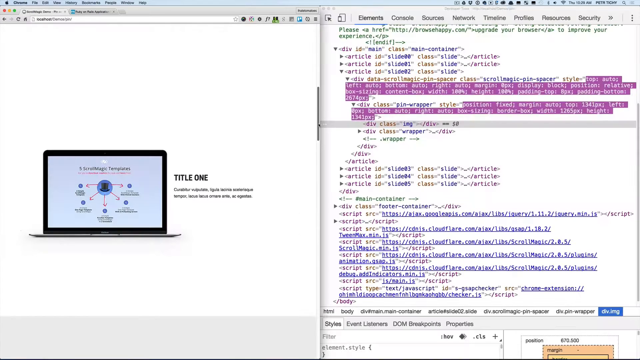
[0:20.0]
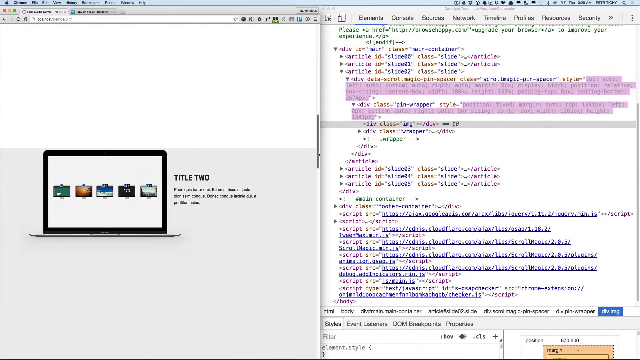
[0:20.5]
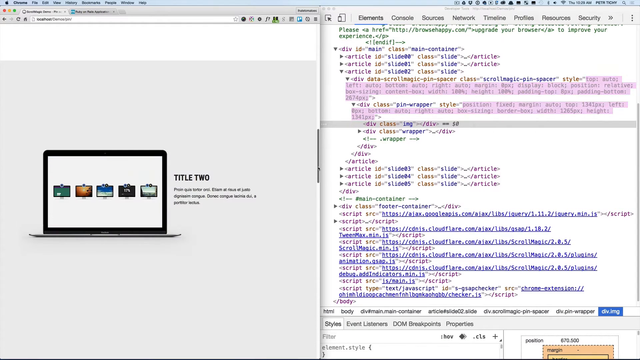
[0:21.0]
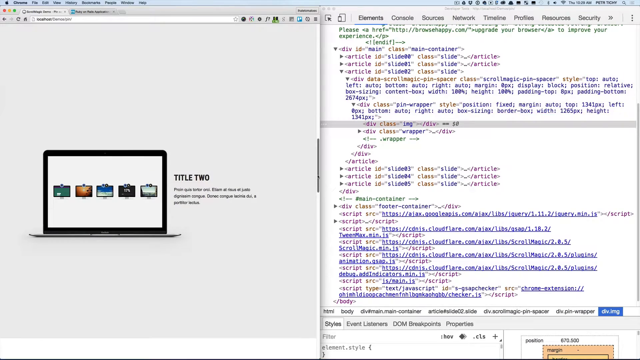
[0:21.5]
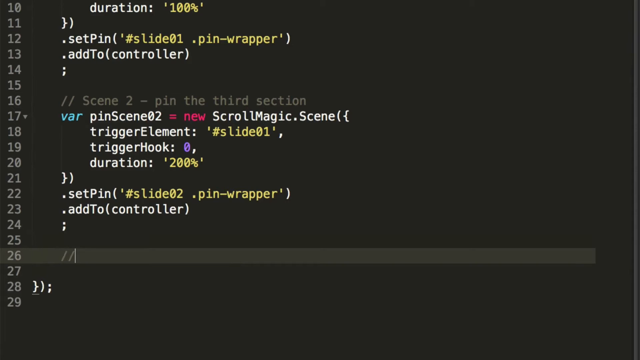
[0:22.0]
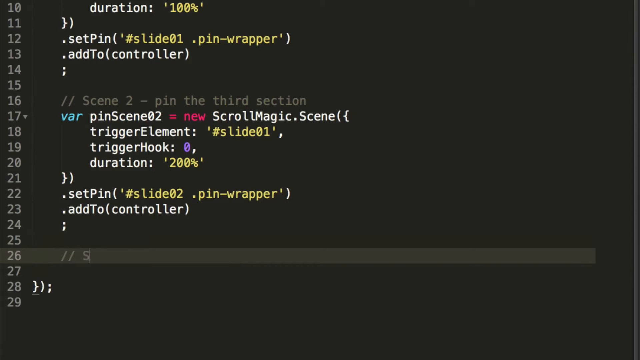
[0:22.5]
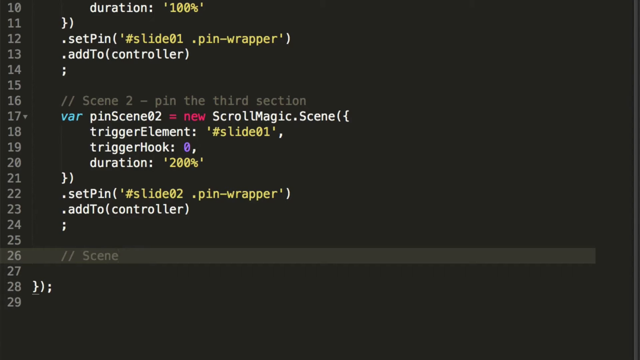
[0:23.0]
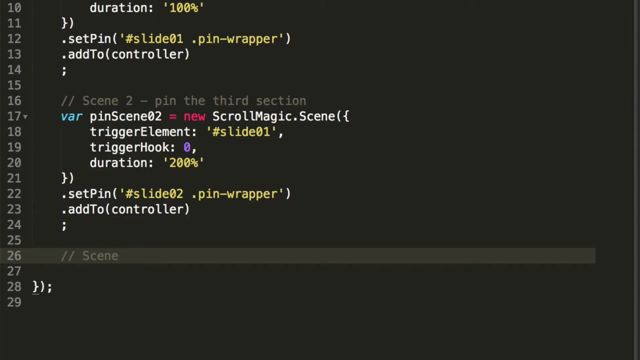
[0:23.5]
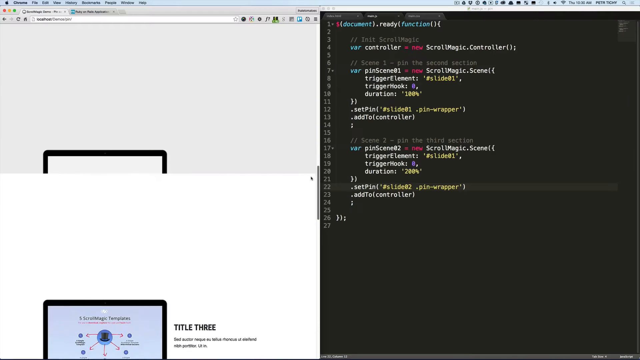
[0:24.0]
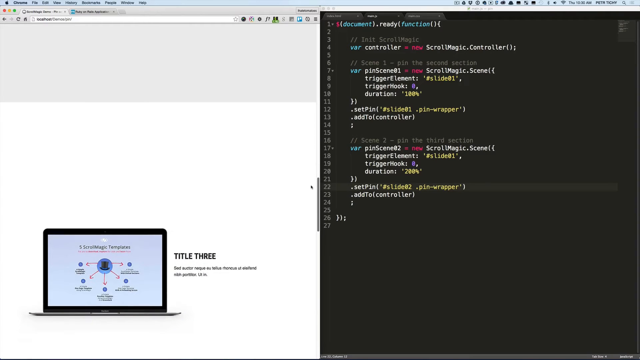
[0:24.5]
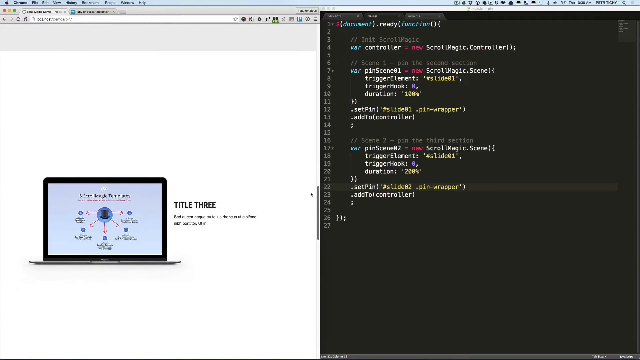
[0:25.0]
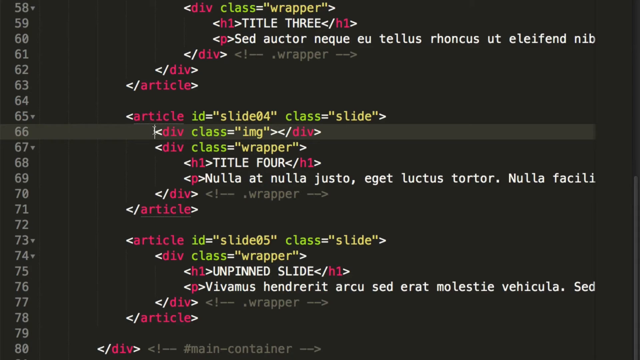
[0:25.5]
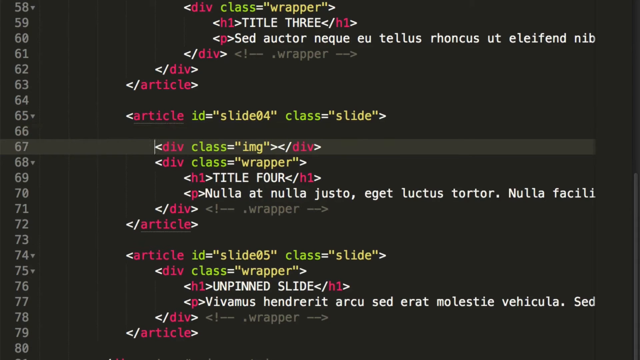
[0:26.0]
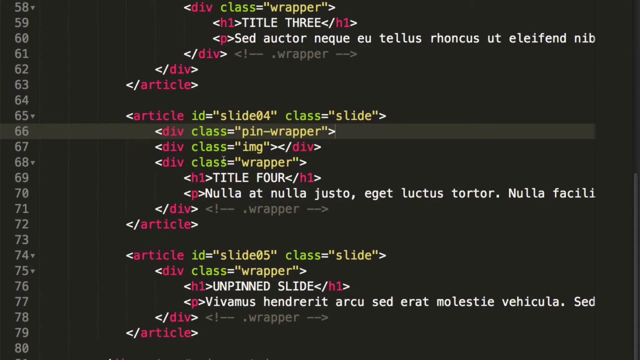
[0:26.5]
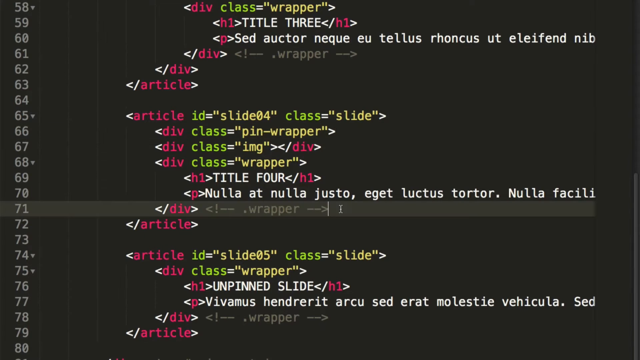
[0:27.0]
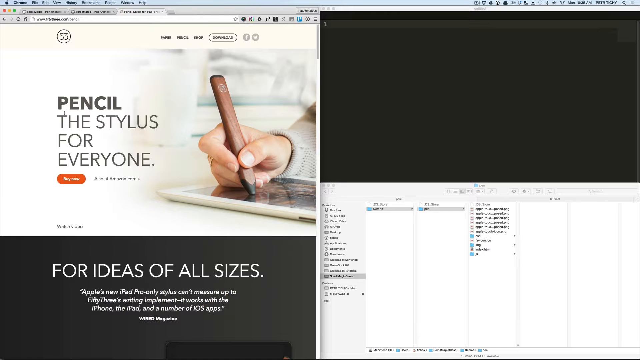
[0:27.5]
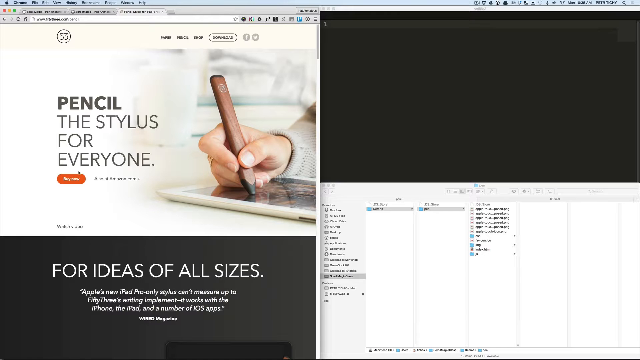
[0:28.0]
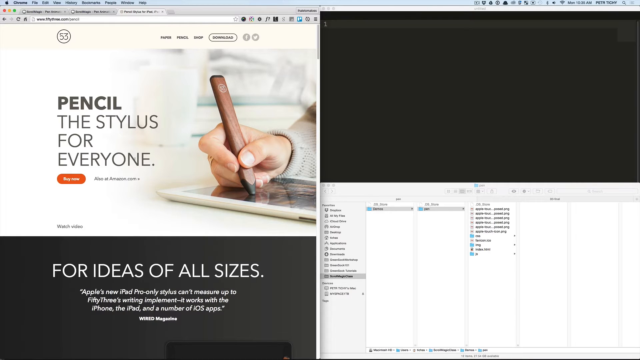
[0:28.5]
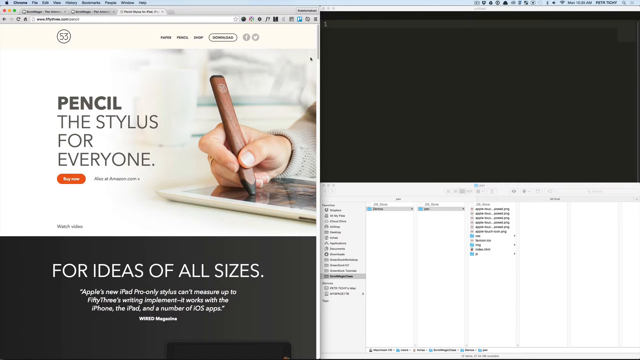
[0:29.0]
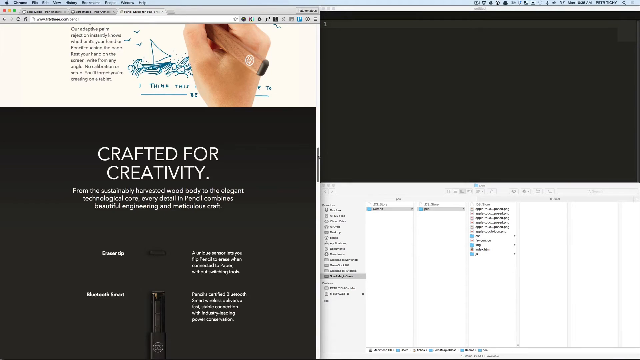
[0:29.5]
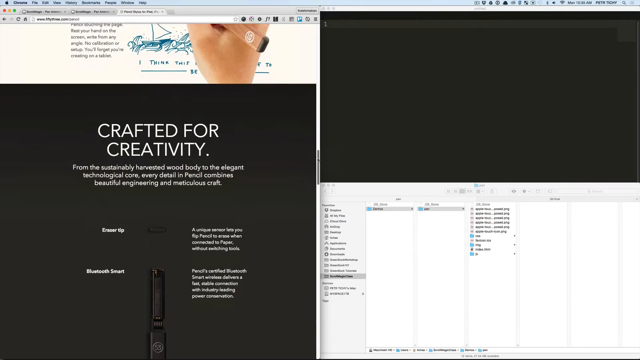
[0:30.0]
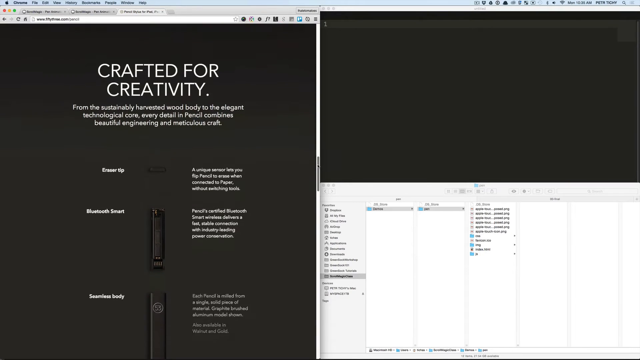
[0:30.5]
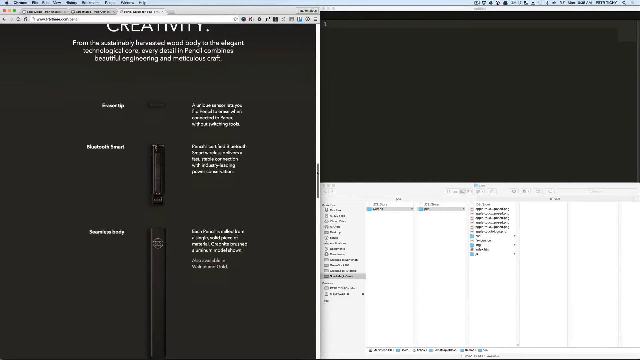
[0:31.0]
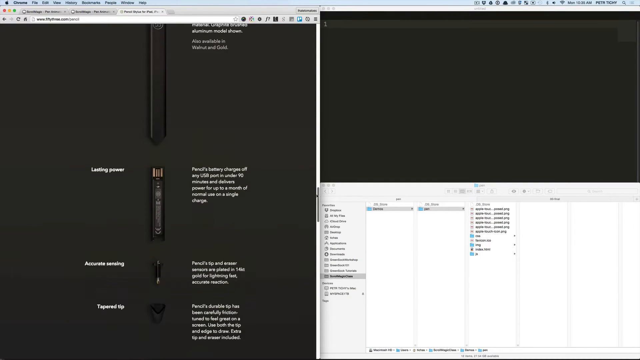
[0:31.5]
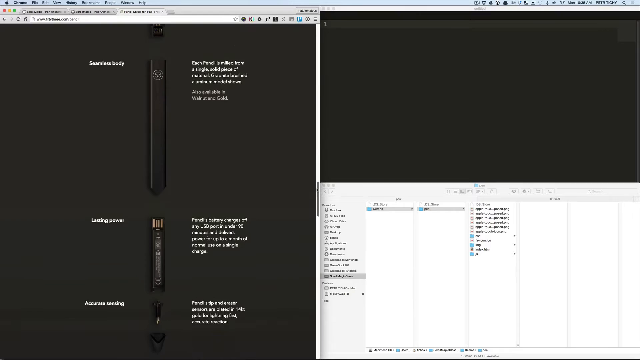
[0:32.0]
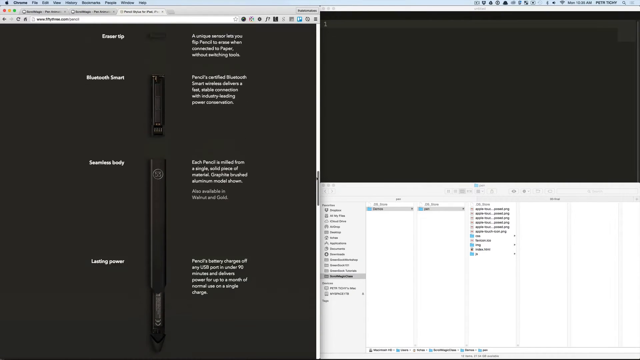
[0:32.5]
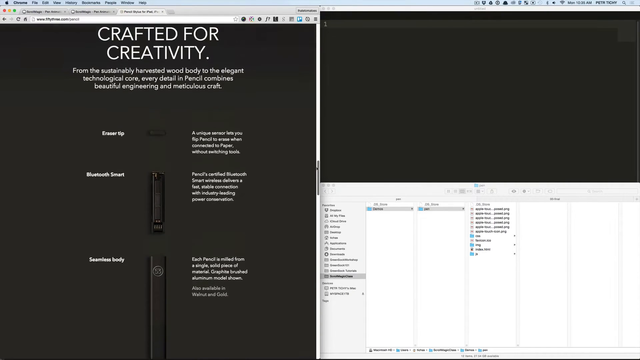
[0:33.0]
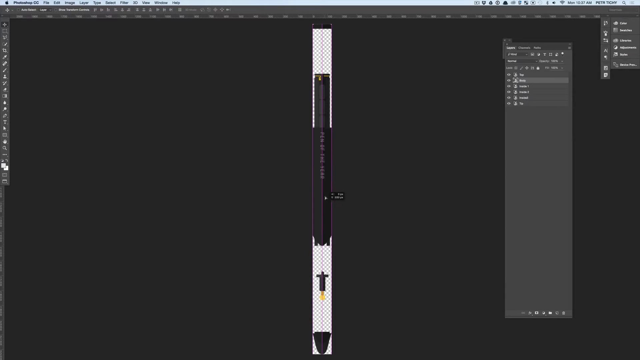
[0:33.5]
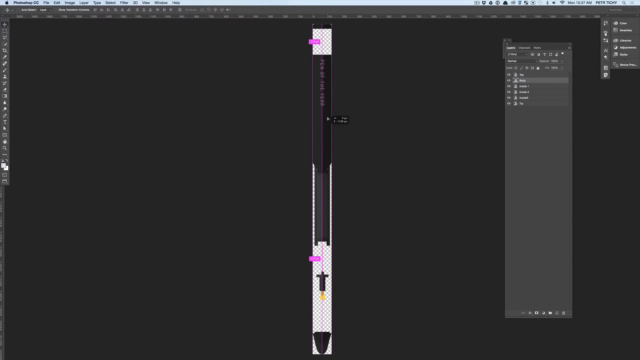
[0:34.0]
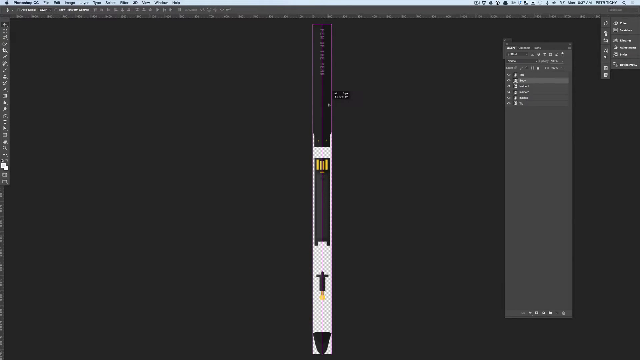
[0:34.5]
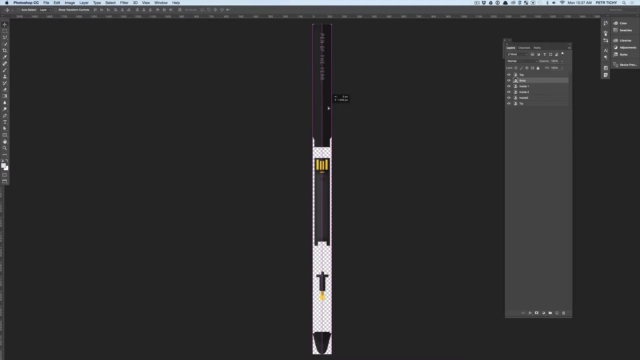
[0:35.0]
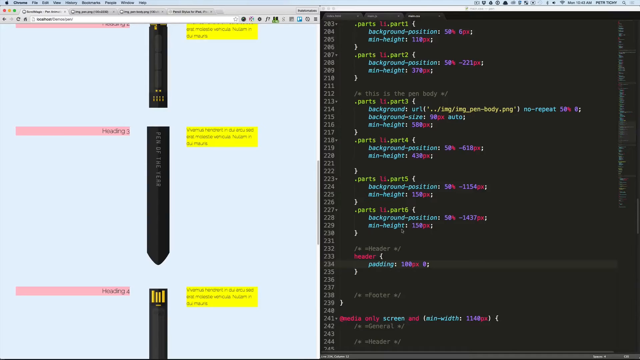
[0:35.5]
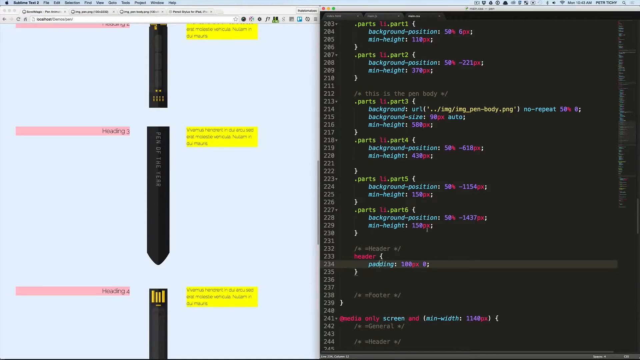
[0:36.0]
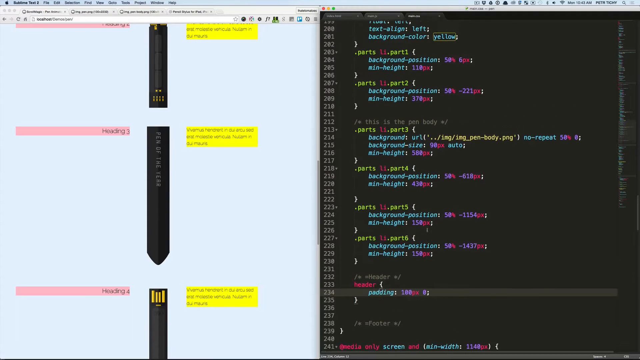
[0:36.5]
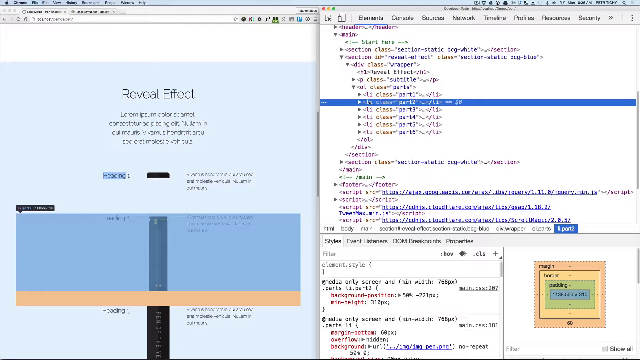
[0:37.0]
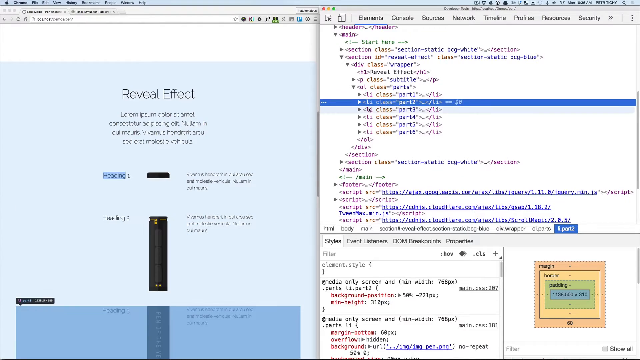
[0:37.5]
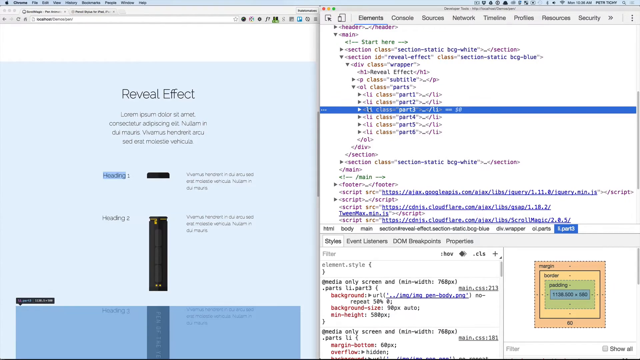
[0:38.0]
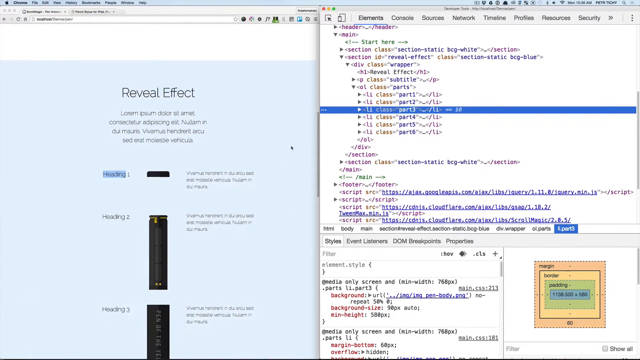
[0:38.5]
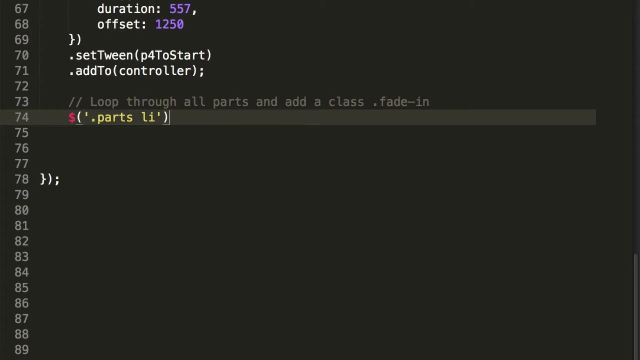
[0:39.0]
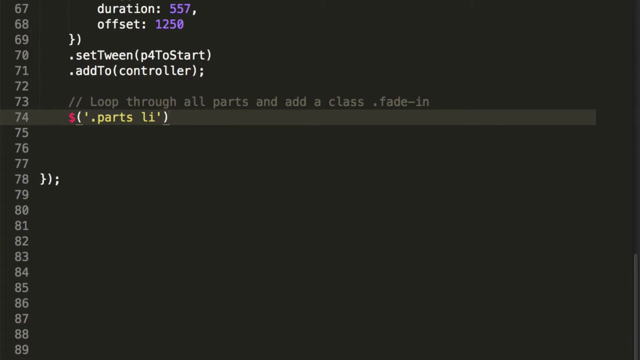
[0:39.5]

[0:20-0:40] The screen is split. The right side shows programming code with the details of the picture on the left side, where a laptop is visible. To the right of the laptop is the word "Title I" along with additional words that are not readable. On the laptop is an image of a circle with five lines coming from it, each leading to a smaller circle with lots of information under it; a title at the top of the larger circle does not seem to be readable. The view briefly switches to a full screen with a black background full of programming code, returns to the split screen with the computer image and the code, and then flips back to the full code on the dark background. Another split screen follows. On the left is an advertisement for a pencil stylus, showing a person holding what looks like a chunky pencil, maybe a drawing-style pencil, on a tablet, with the words "for ideas of all sizes" underneath. The right side of this split screen is divided into halves, the top half completely black; the main background is white. There are multiple split screens. Then a full screen of programming code appears, including "Duration 557 offset: 1250".